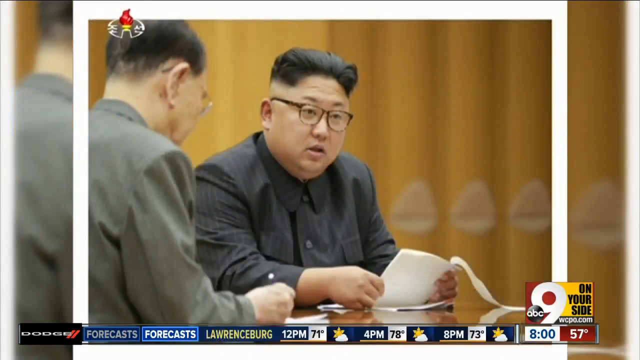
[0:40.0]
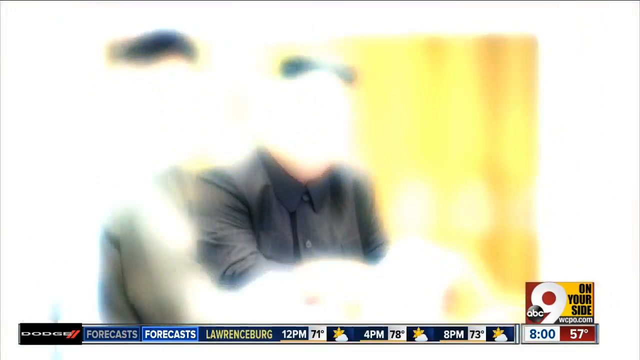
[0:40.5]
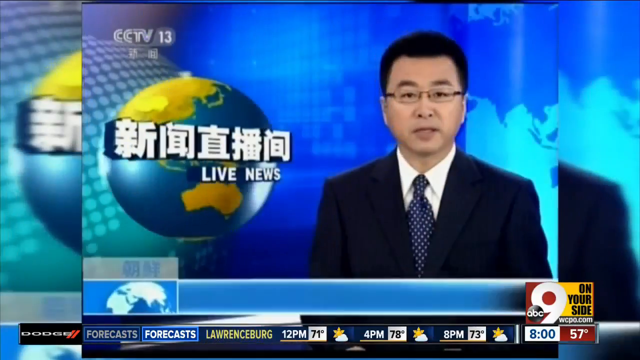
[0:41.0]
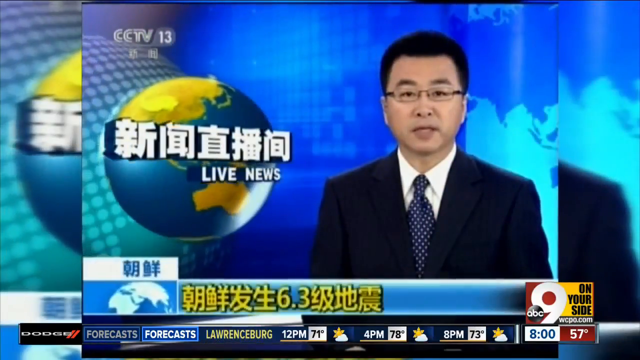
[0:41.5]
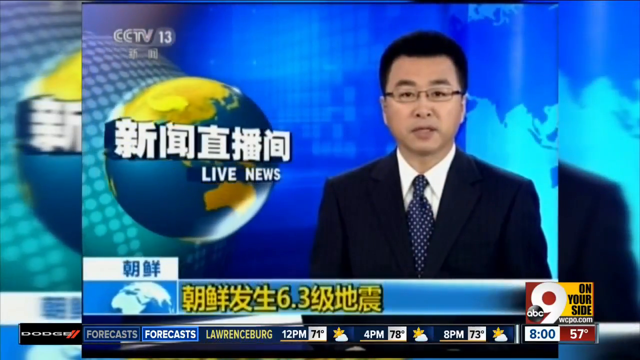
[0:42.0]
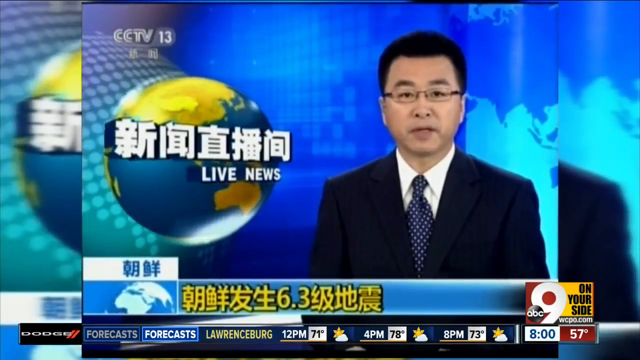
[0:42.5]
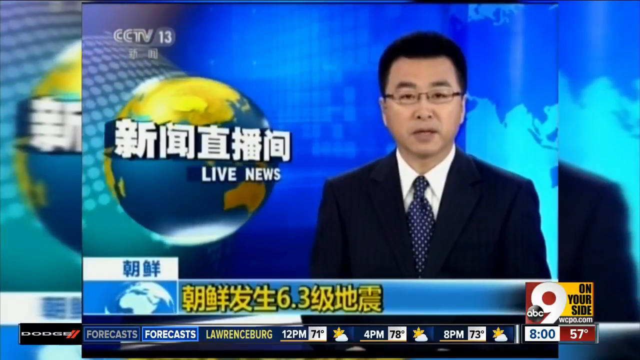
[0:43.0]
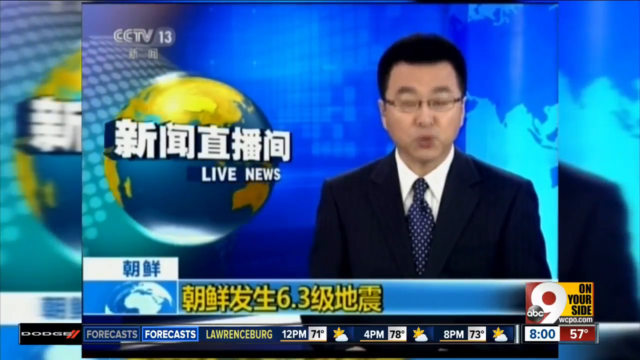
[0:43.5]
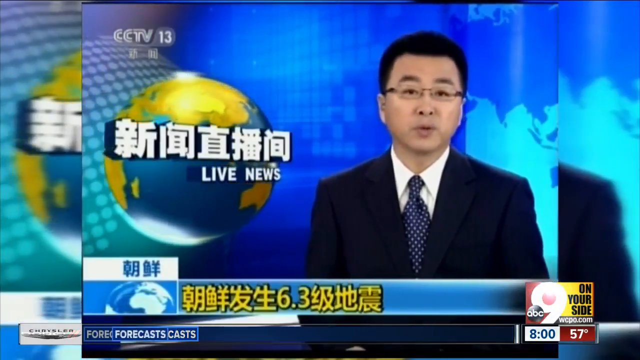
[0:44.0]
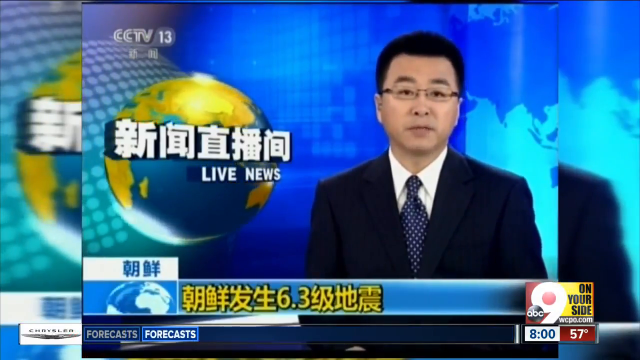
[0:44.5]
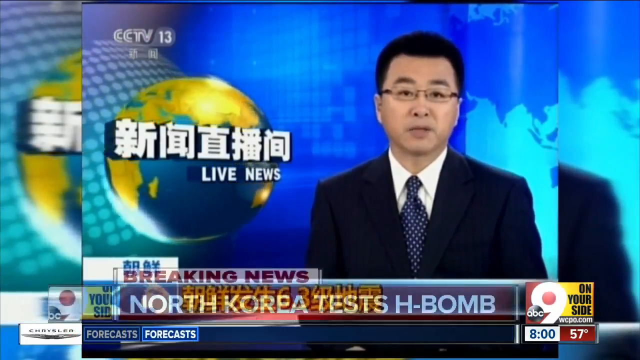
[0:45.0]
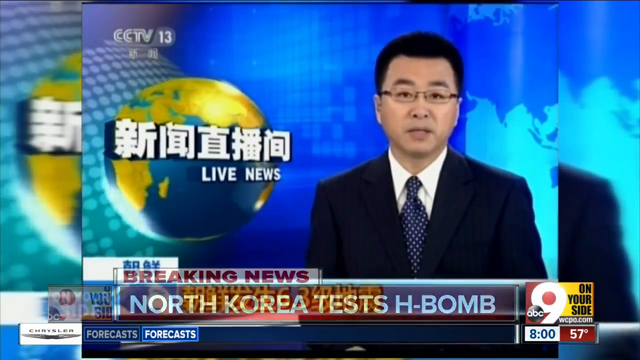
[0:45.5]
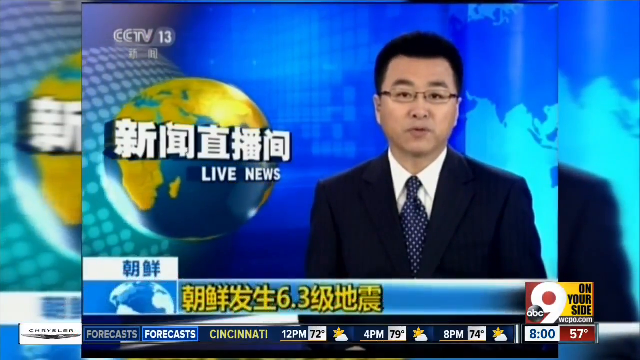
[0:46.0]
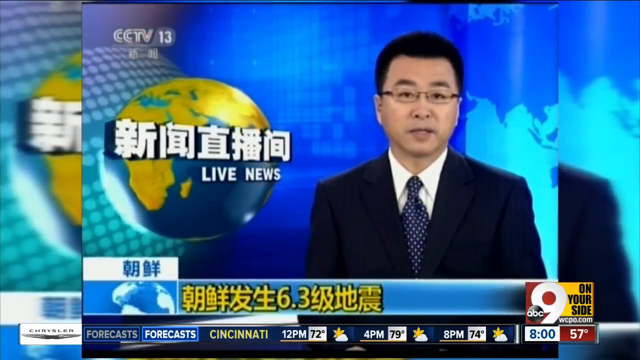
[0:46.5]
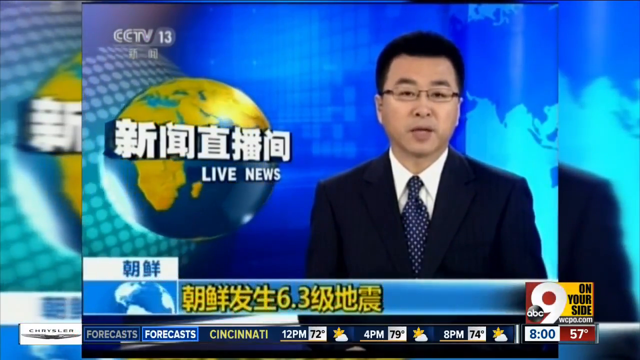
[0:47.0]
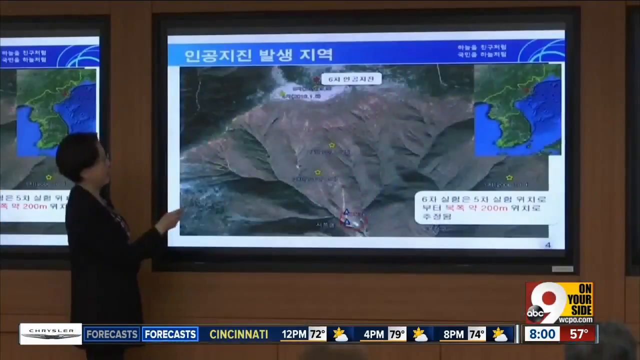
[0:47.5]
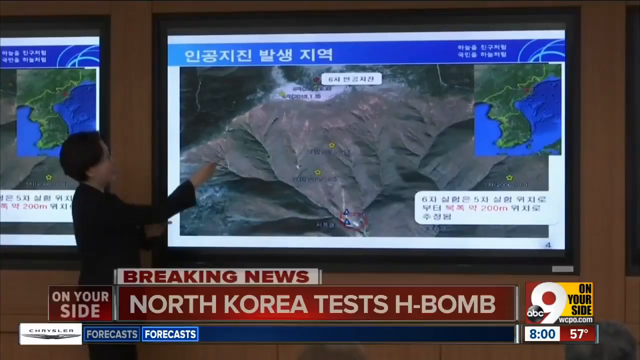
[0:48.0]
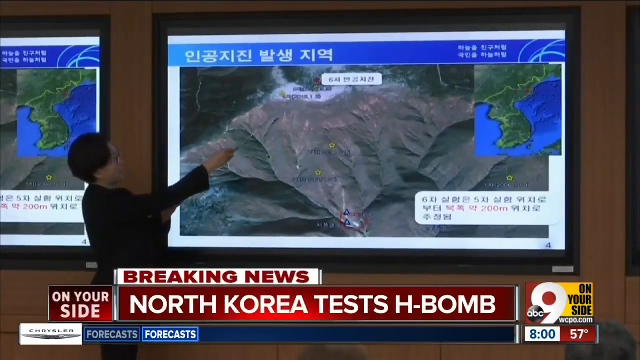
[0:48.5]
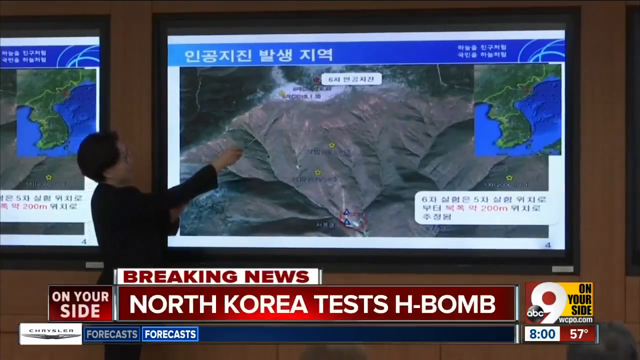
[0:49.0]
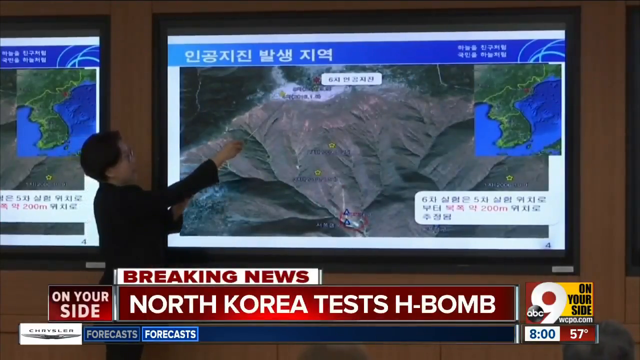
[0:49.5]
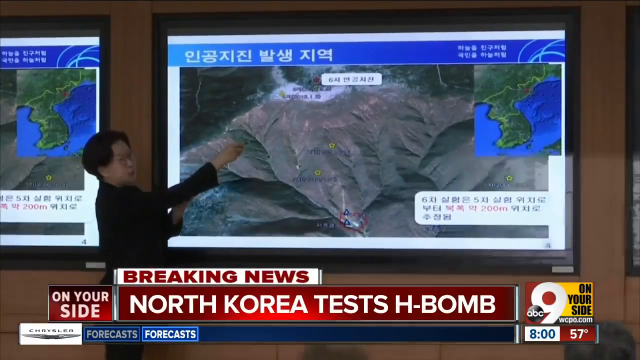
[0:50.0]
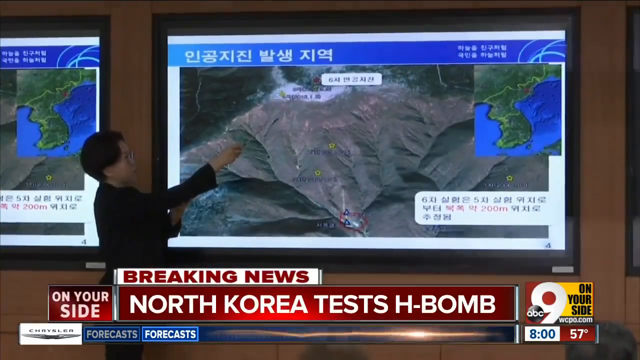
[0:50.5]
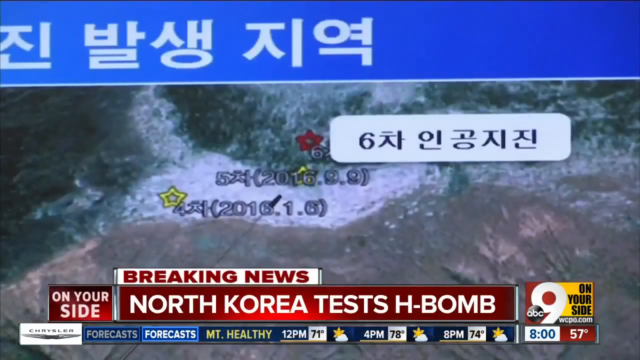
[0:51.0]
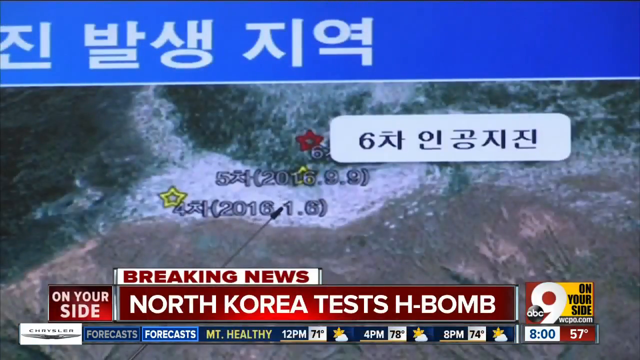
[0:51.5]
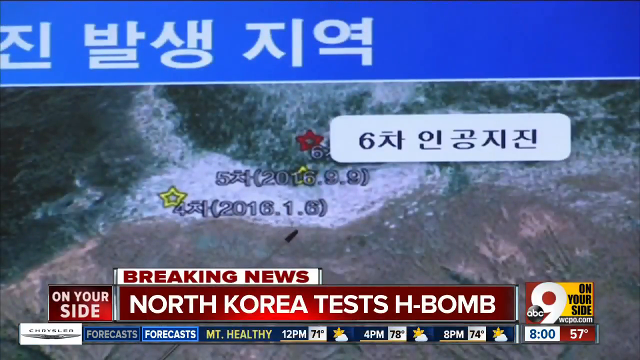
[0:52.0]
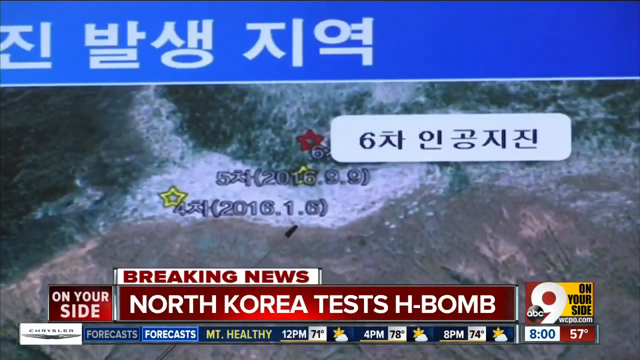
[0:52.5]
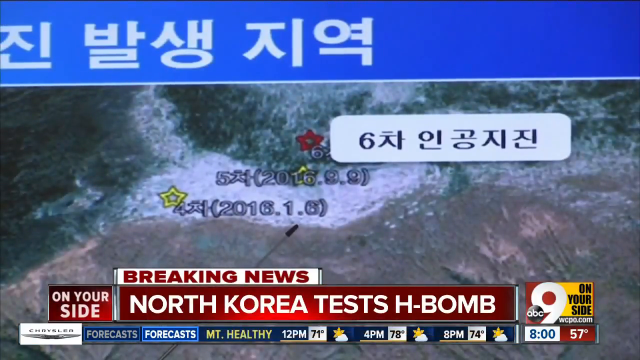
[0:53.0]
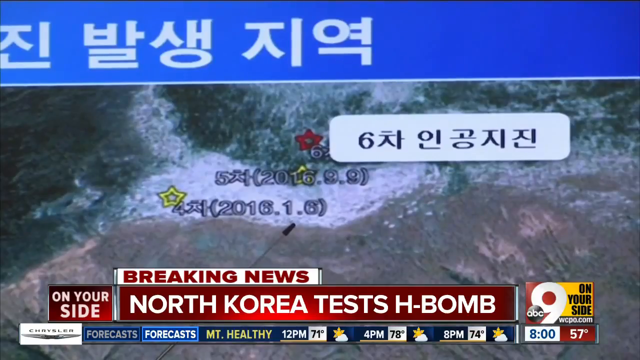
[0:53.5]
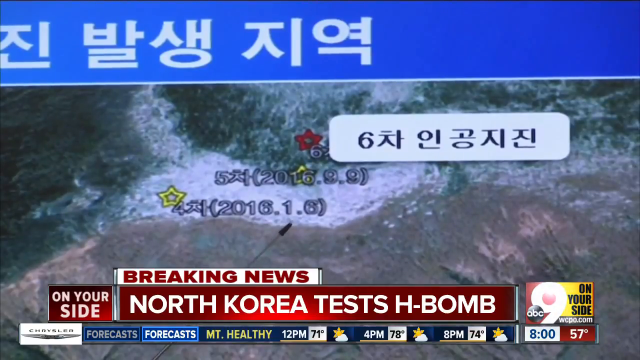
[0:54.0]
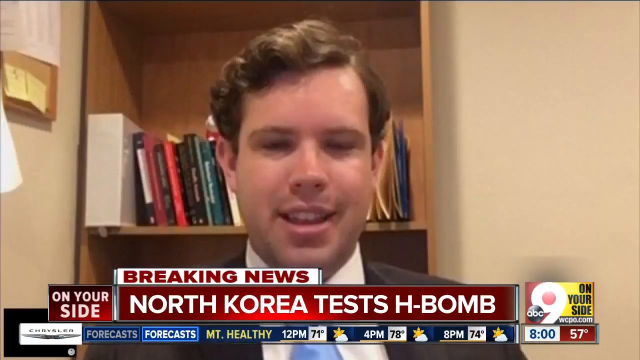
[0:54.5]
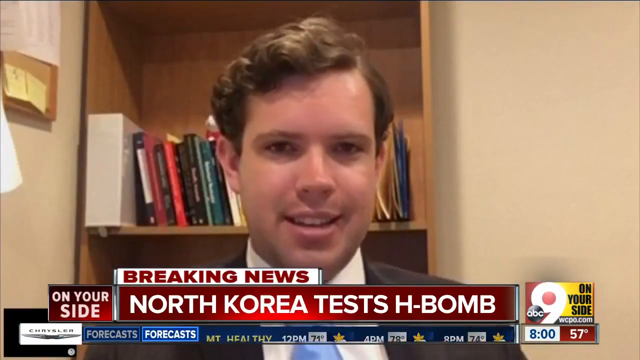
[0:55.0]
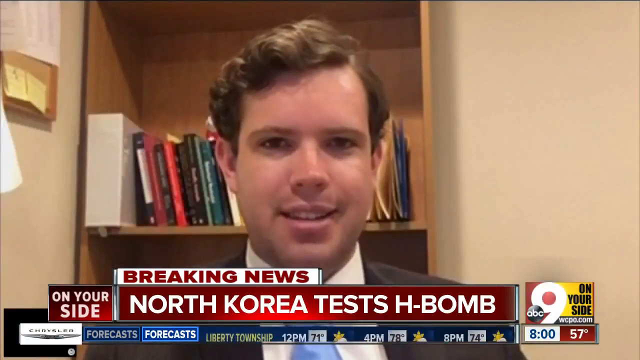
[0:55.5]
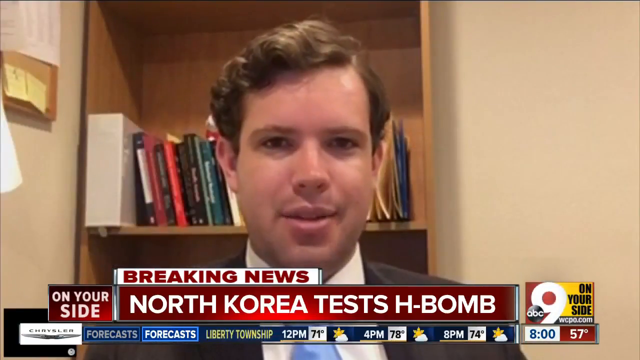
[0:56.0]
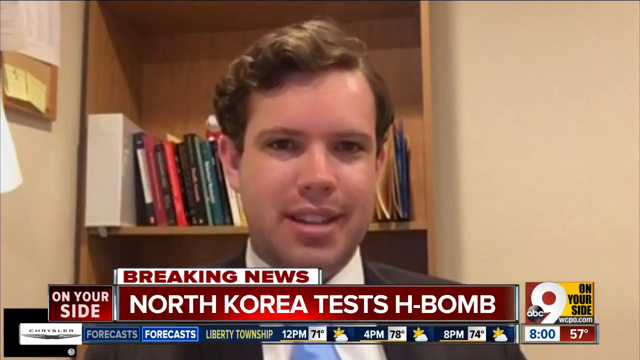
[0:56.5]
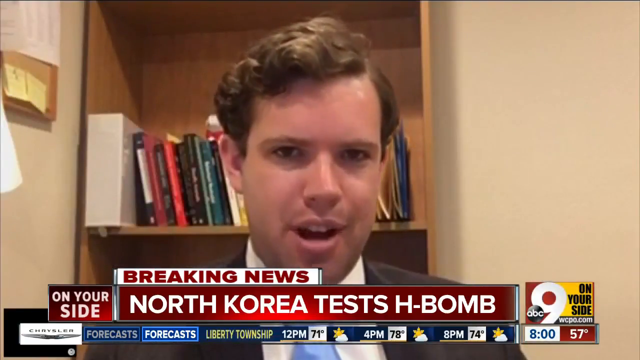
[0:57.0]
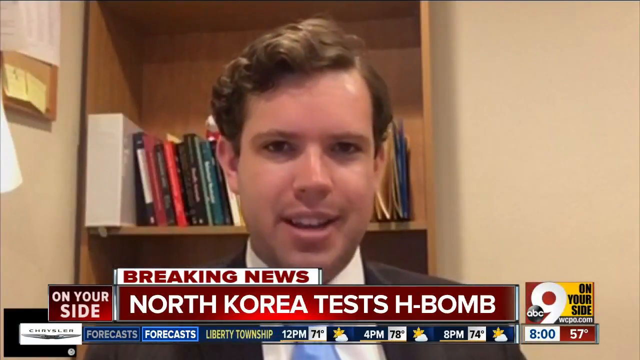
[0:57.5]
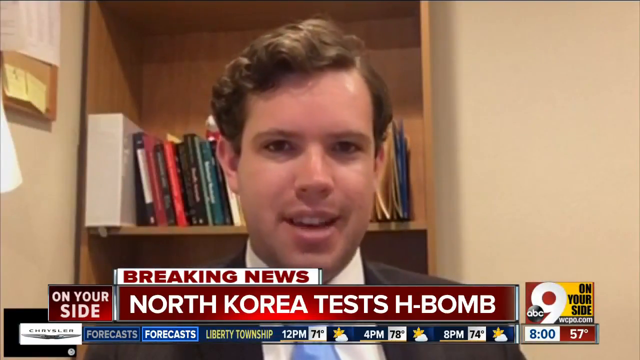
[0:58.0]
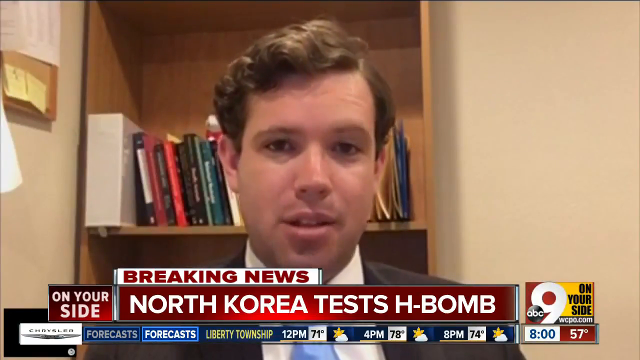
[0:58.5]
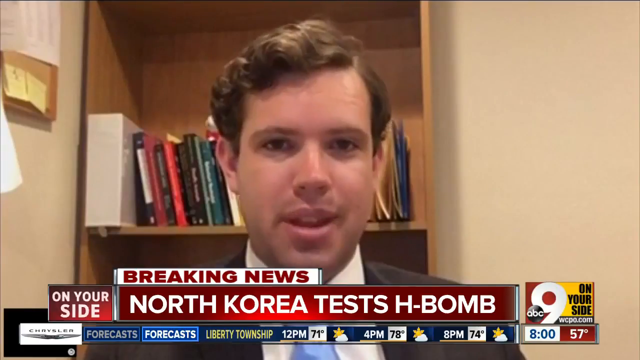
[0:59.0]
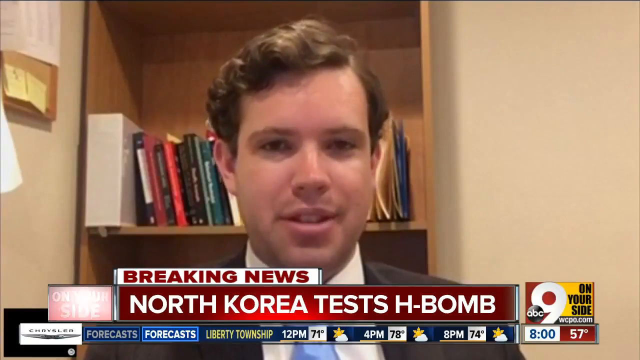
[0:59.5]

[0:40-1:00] Photographs show the leader of Korea in different poses. In one he is sitting at a table in front of some people; another shows him at the same table from a different angle, holding a piece of paper in both hands, apparently several pages stapled in the upper left corner with the top sheet folded back over the top. Next comes what looks like a North Korean newscast, with text in another language on the left side of the screen and along the bottom. A different newsman on the right, with glasses and a black suit with a blue tie with white polka dots, speaks while looking directly at the camera. Text briefly appears at the bottom of the screen reading "North Korea tests H-bomb", this time with Korea spelled correctly. A map that looks like a terrain map is on the wall, and a person off to the left in a black long-sleeve shirt holds up their right hand pointing at it, apparently holding a pointer stick. The view then zooms in close on what they are pointing at.